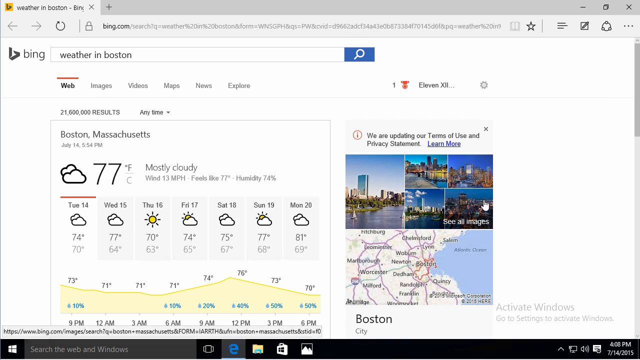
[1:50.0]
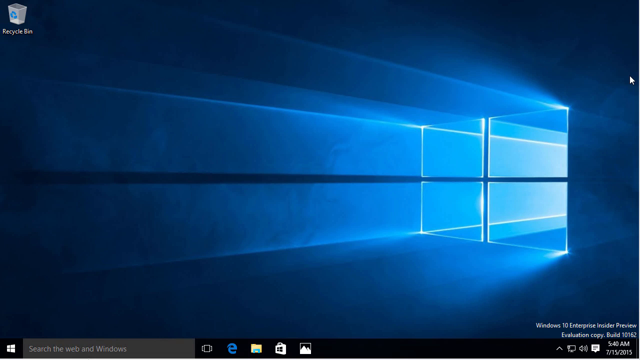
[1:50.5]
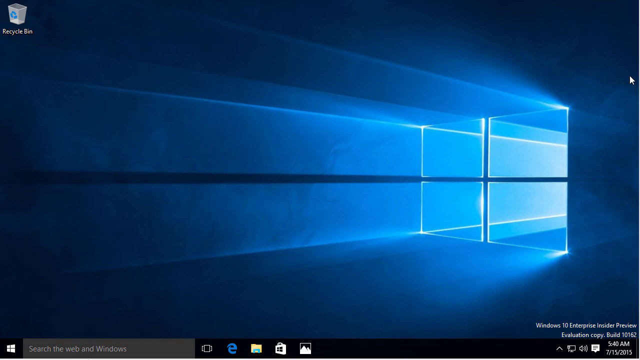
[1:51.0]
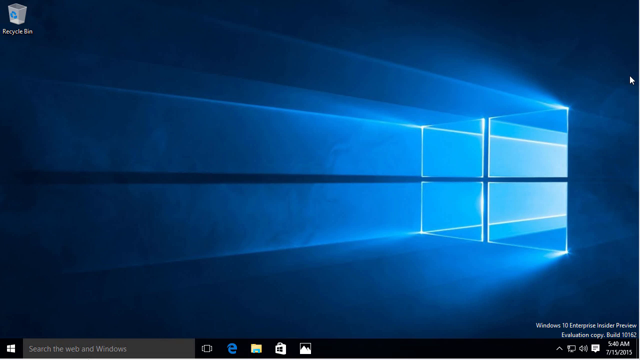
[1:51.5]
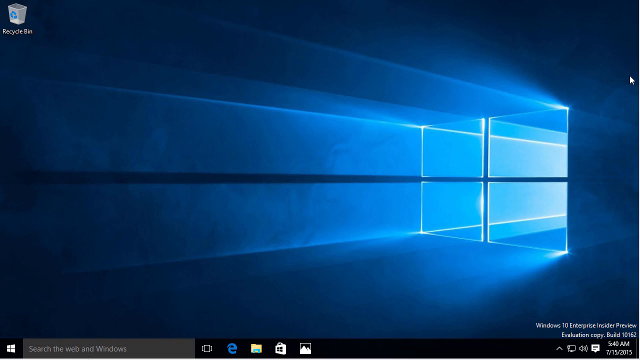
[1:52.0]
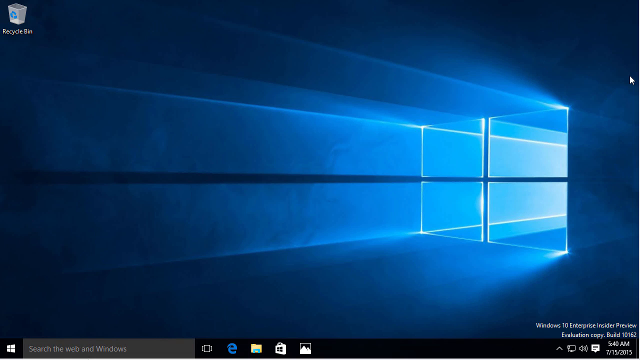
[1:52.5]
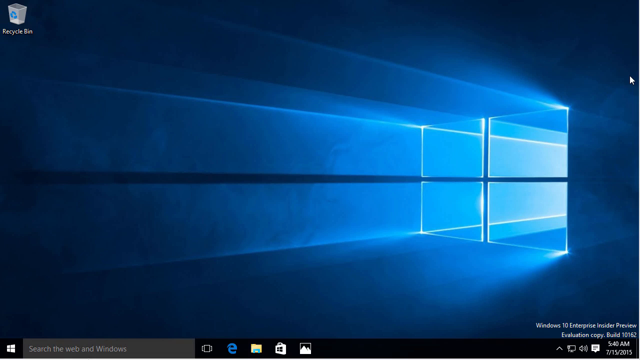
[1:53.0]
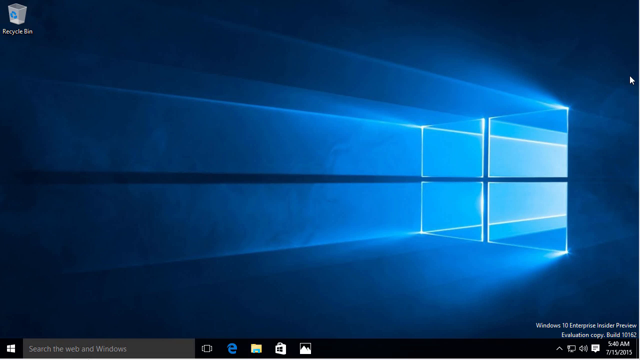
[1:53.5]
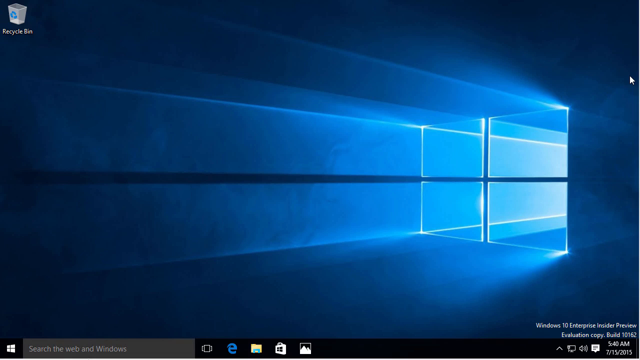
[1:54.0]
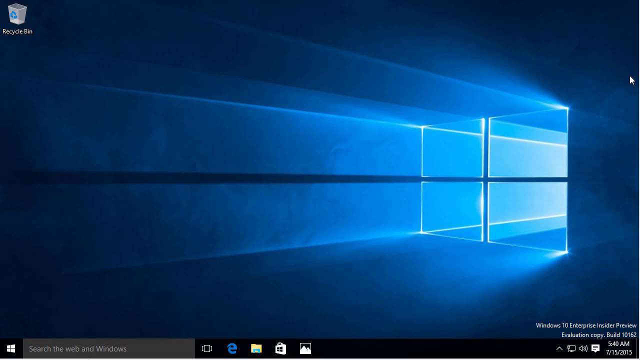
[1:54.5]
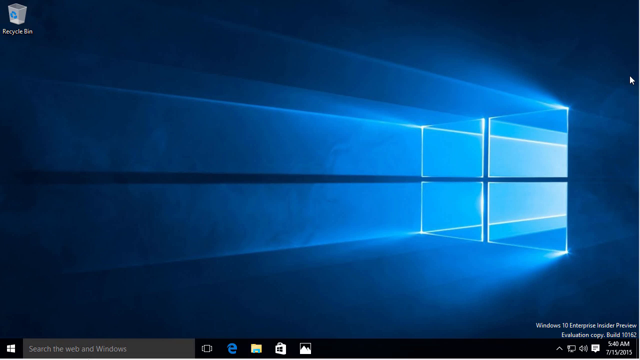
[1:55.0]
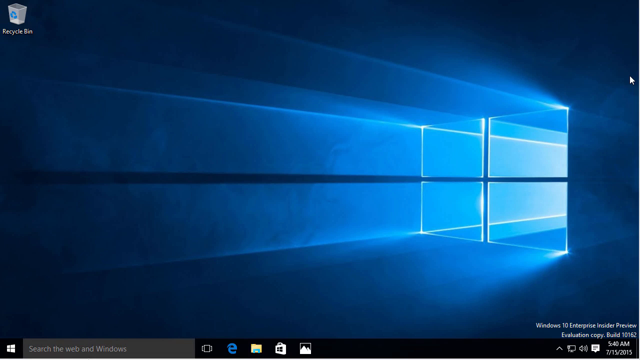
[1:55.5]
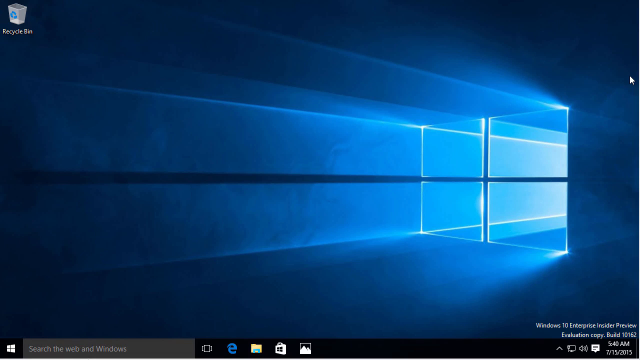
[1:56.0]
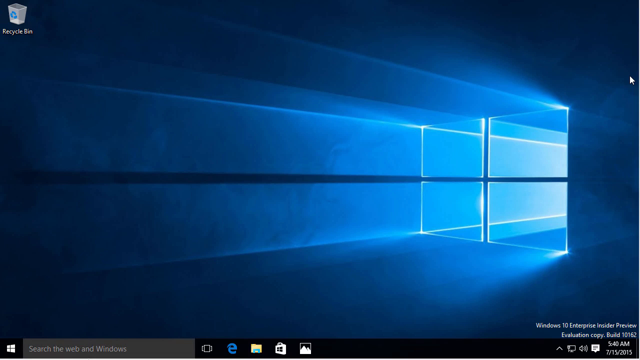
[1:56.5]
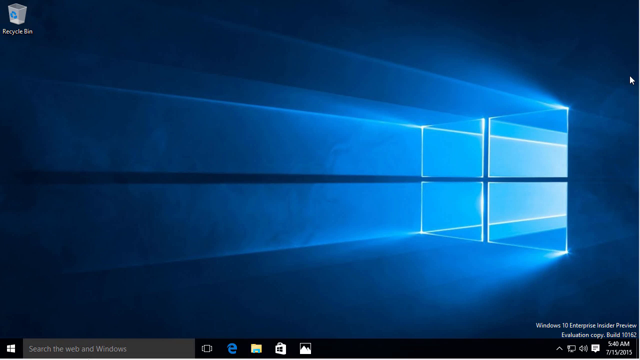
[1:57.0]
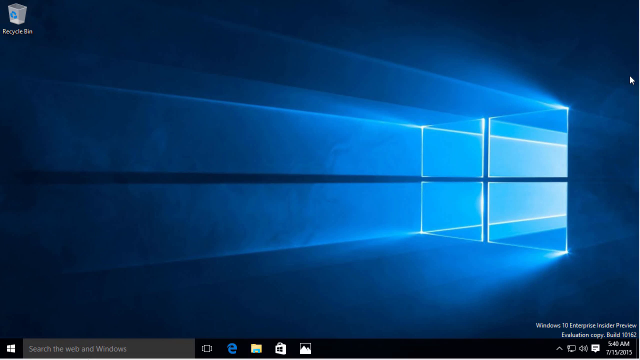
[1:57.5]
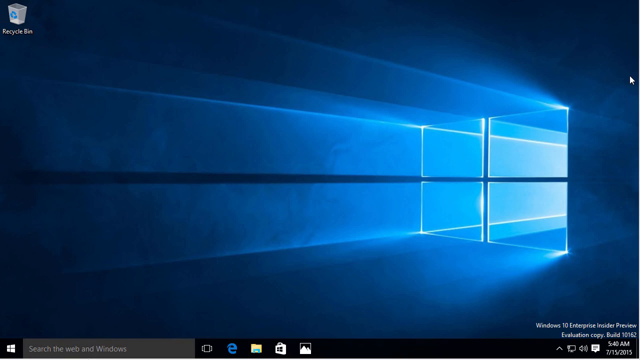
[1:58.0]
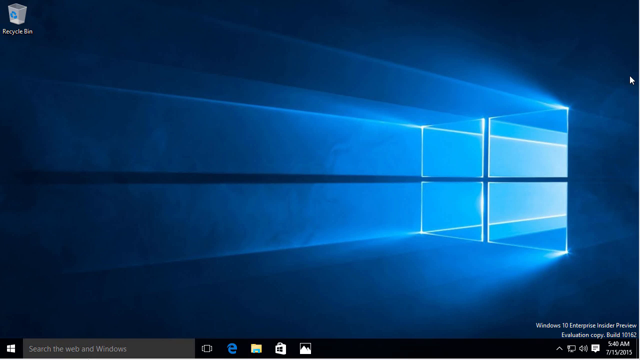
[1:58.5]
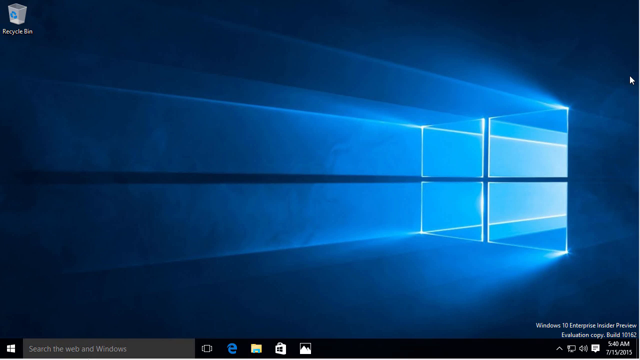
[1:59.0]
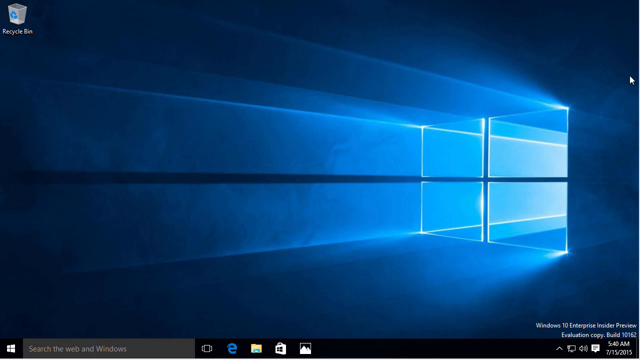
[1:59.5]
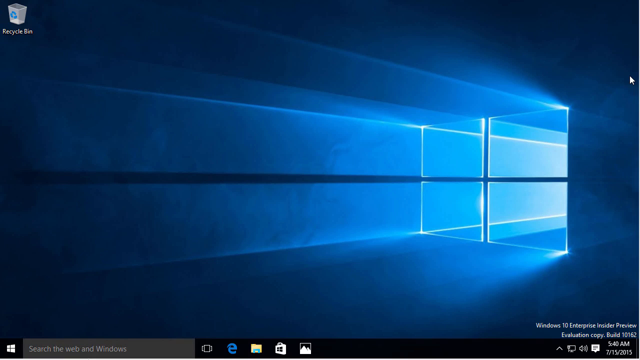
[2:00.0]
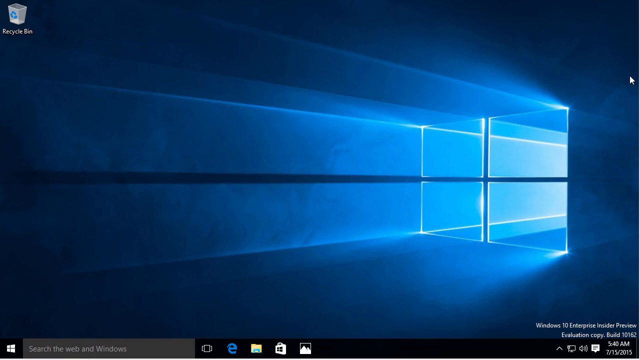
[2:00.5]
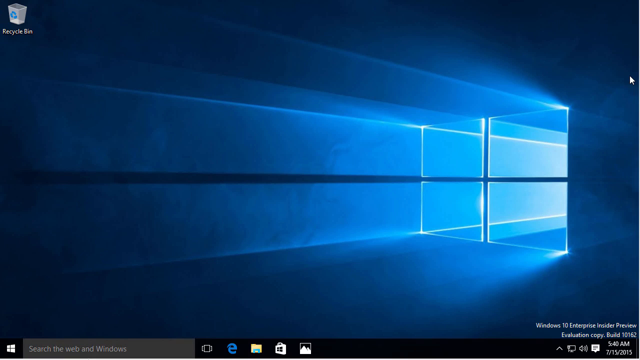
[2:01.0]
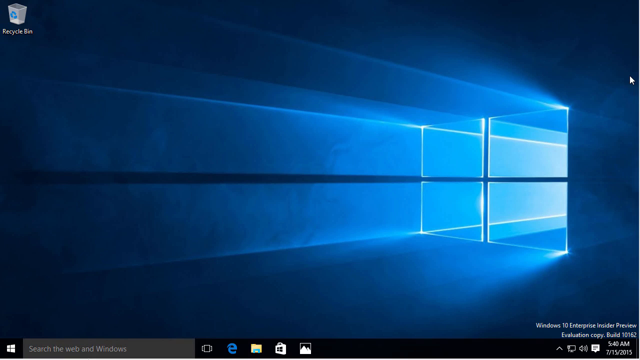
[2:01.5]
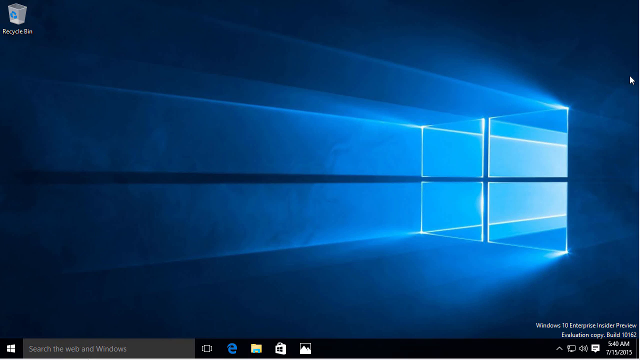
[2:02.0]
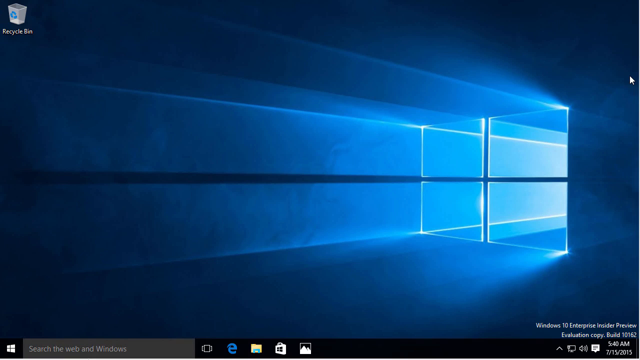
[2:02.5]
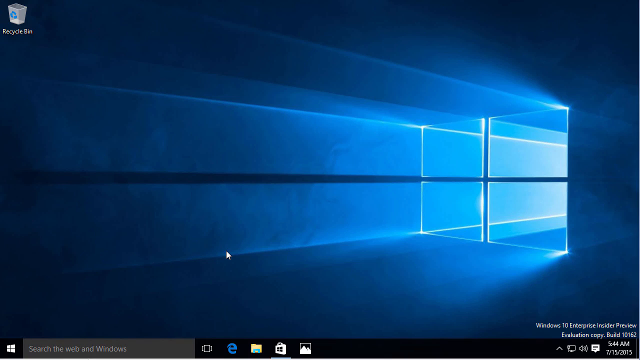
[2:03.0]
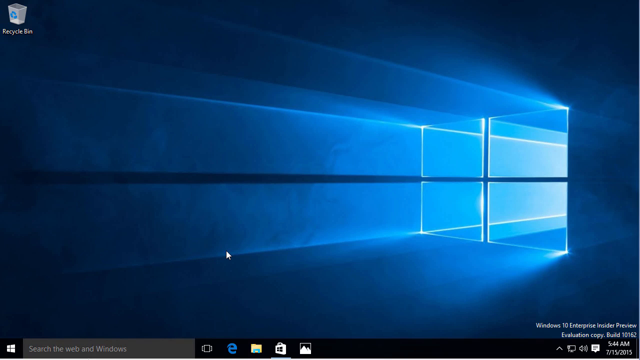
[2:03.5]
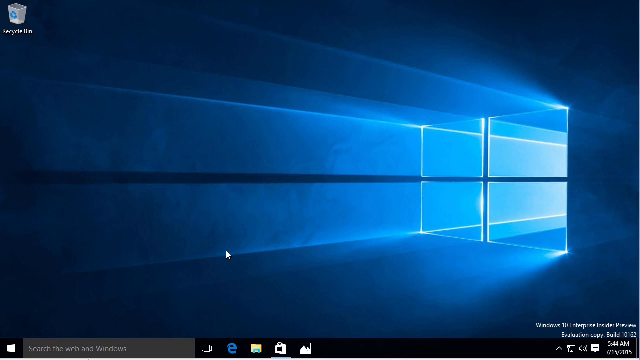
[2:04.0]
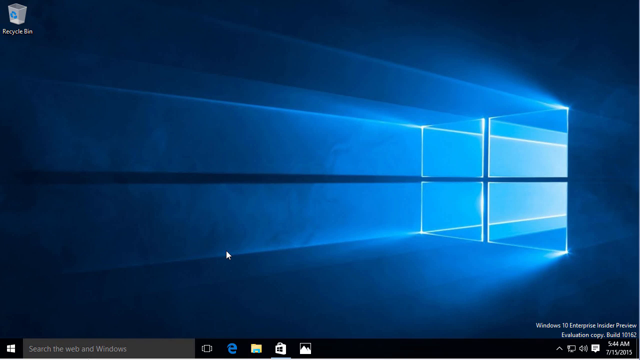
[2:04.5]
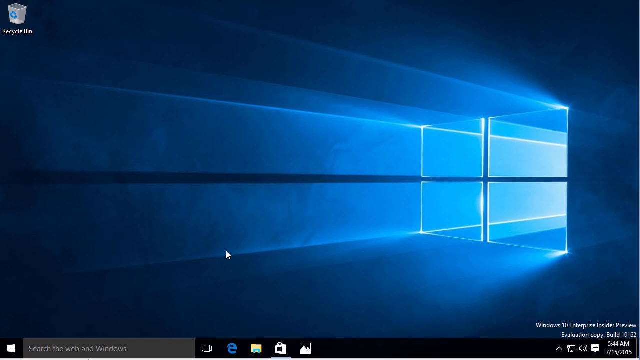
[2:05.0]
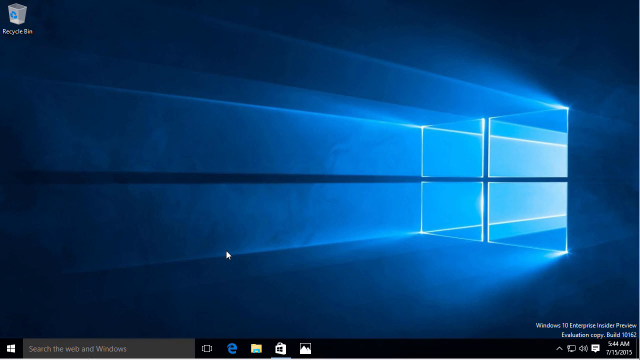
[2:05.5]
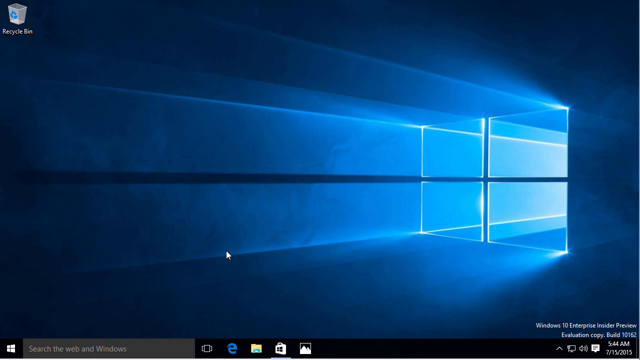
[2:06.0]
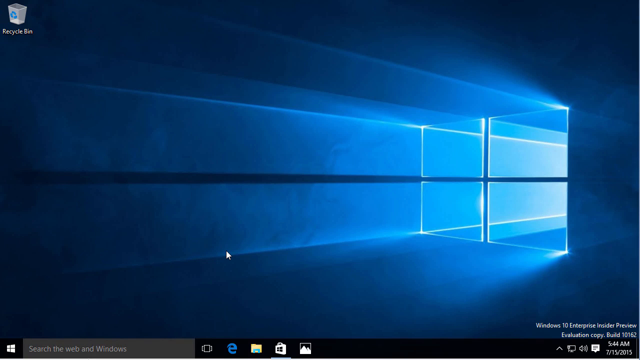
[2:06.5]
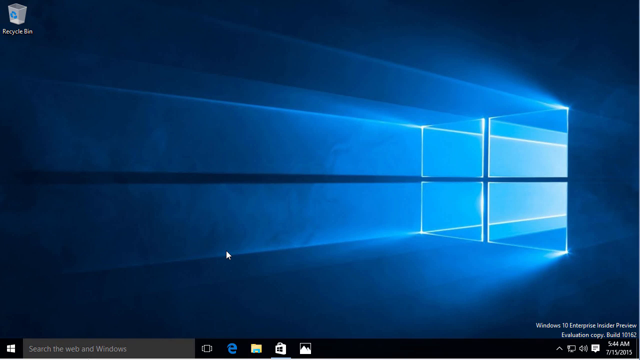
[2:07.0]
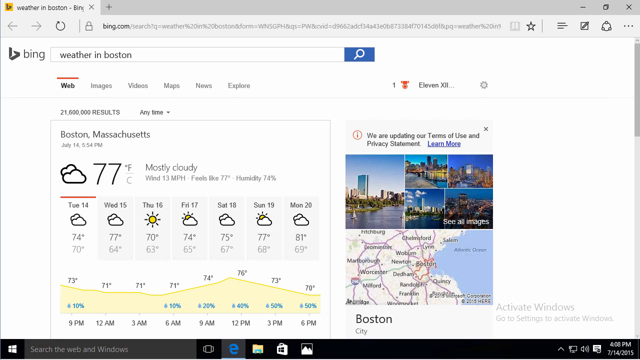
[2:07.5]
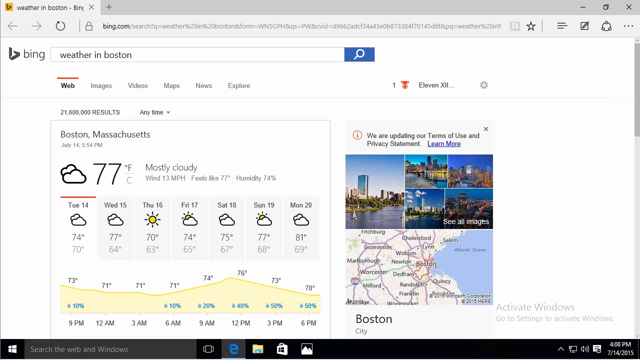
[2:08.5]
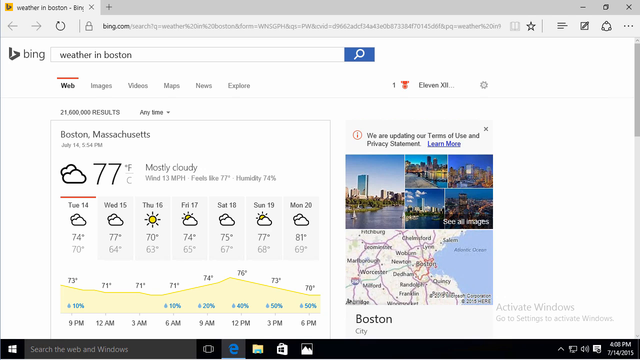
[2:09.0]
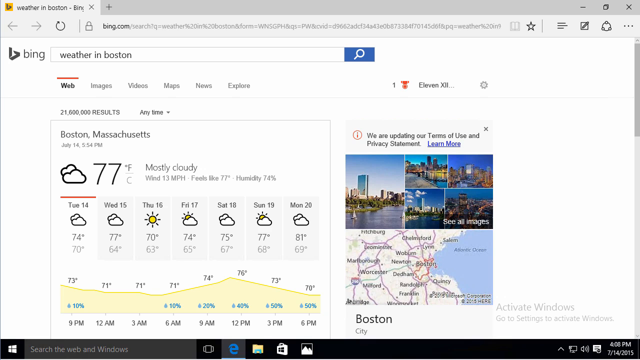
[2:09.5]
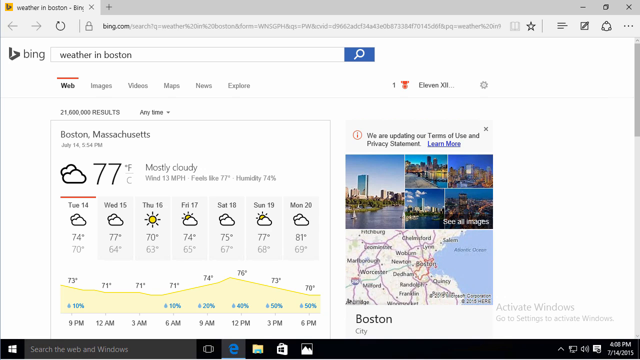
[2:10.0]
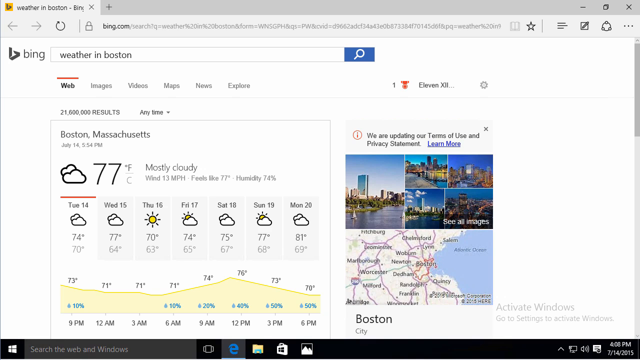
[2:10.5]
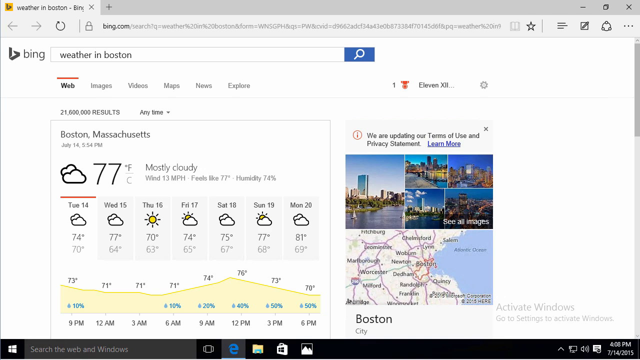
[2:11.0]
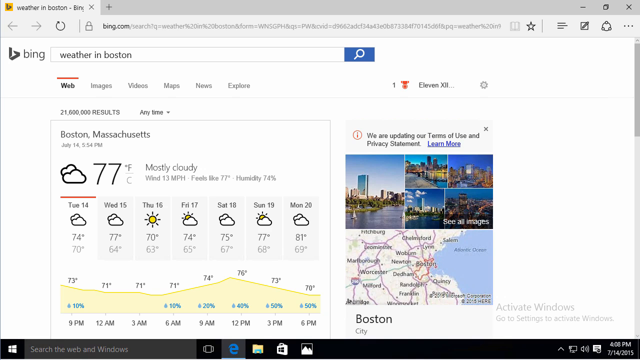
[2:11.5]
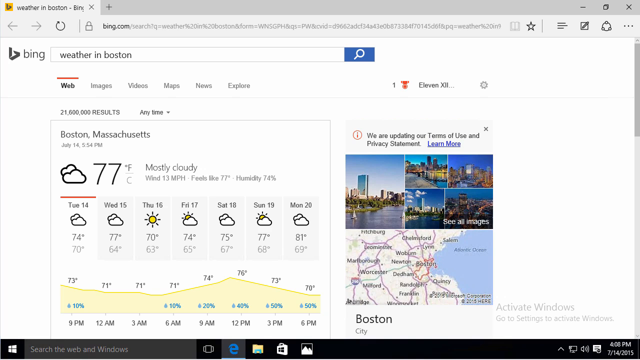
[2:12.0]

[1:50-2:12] After weather in Boston is searched, the result is clicked to open it on the web. The web page shows the current weather, the weather for the past week with comparisons, today's weather, how the weather has changed, the forecast, cloudiness, temperature, rainy days, and temperatures for nearby places for comparison.